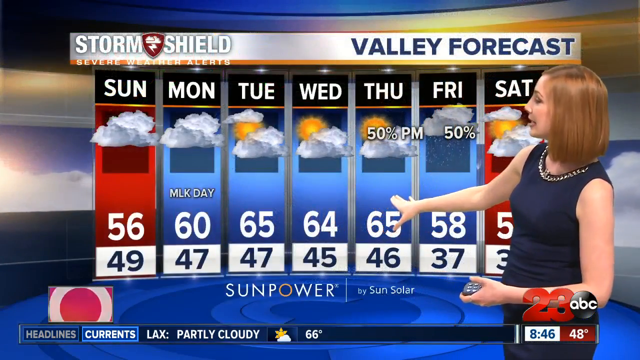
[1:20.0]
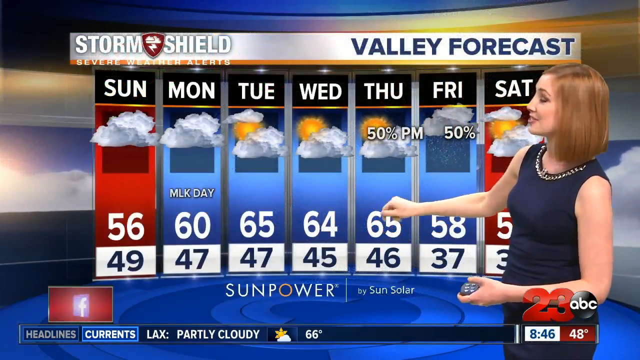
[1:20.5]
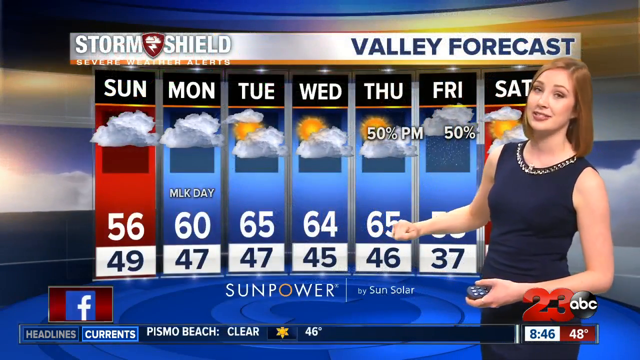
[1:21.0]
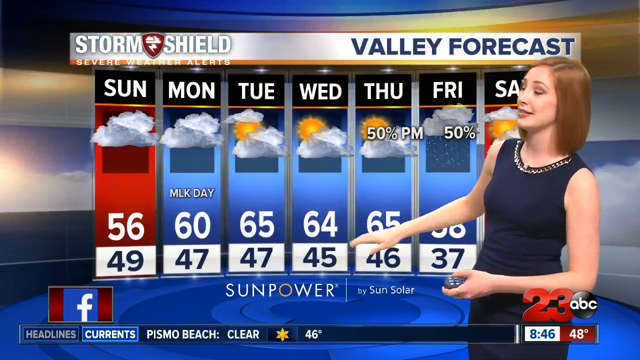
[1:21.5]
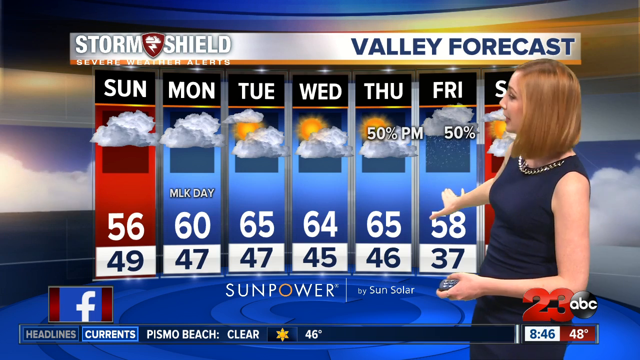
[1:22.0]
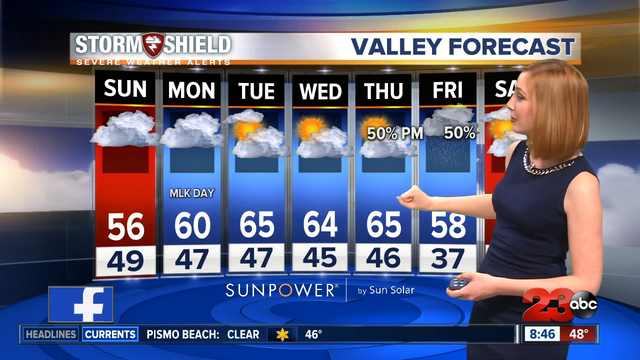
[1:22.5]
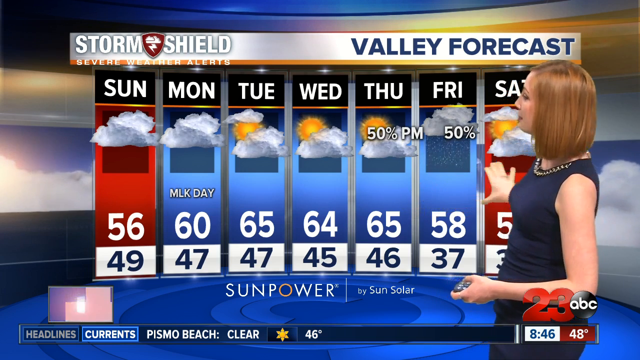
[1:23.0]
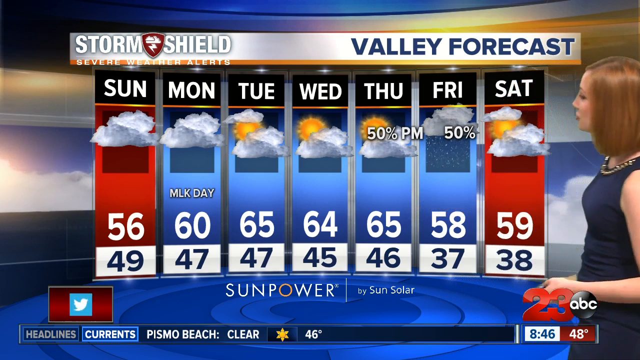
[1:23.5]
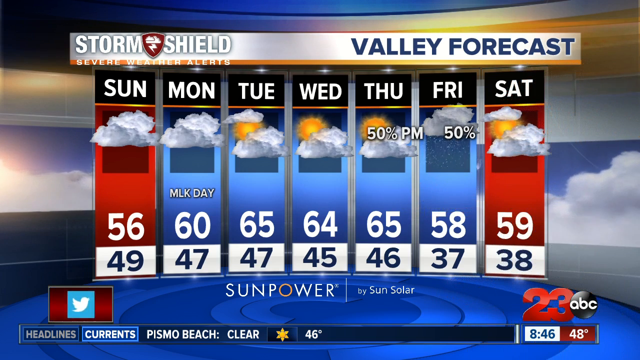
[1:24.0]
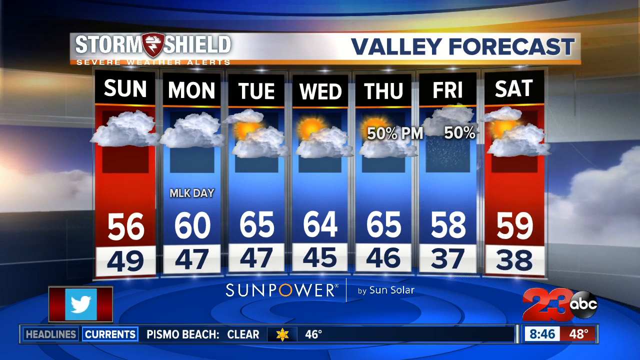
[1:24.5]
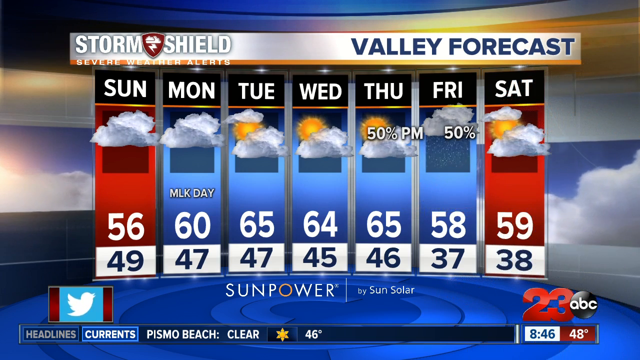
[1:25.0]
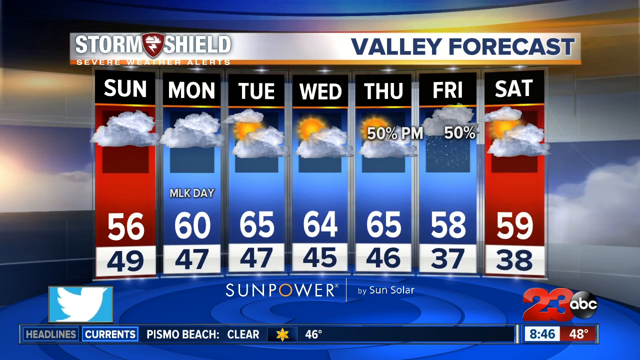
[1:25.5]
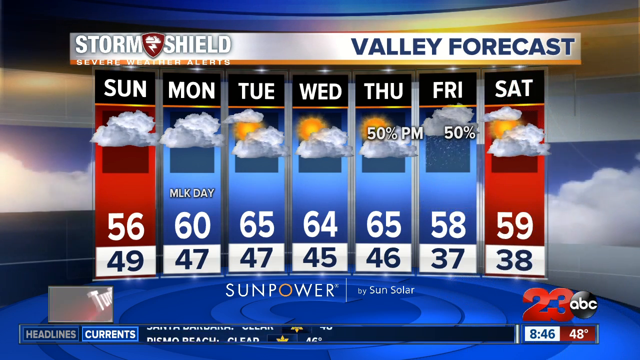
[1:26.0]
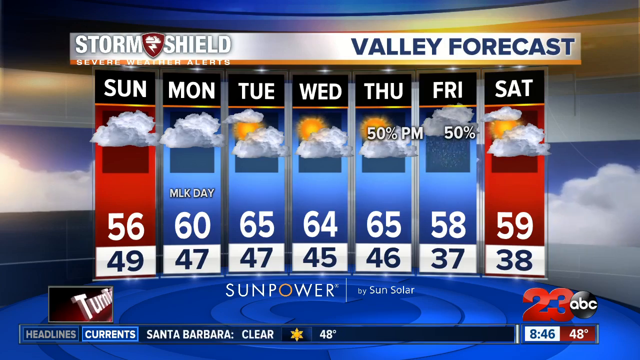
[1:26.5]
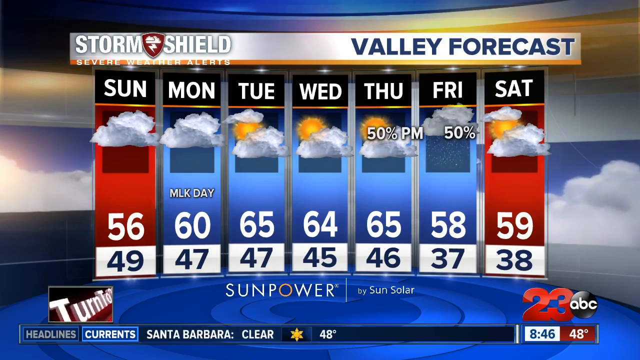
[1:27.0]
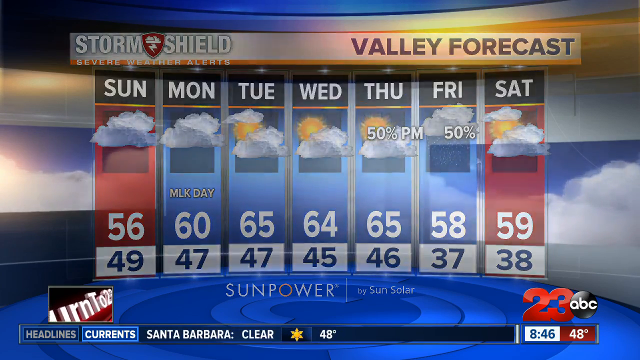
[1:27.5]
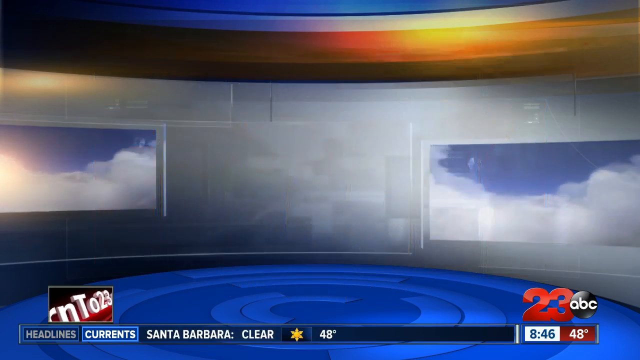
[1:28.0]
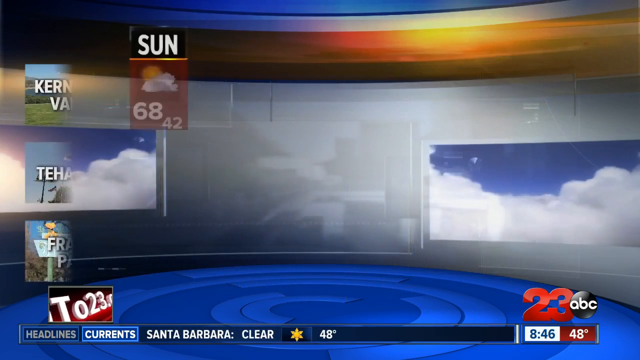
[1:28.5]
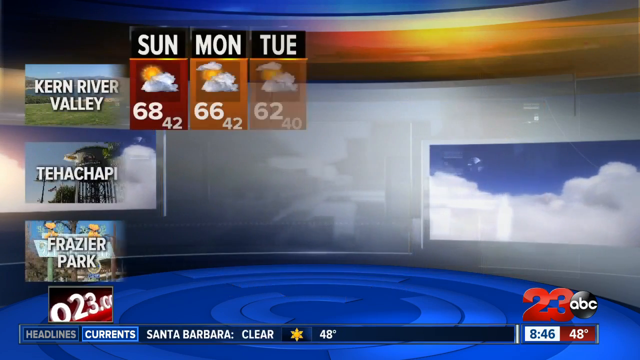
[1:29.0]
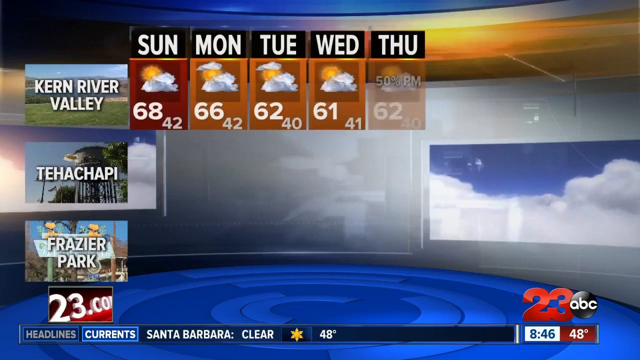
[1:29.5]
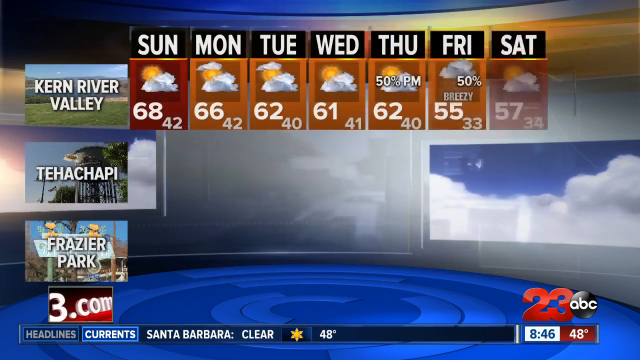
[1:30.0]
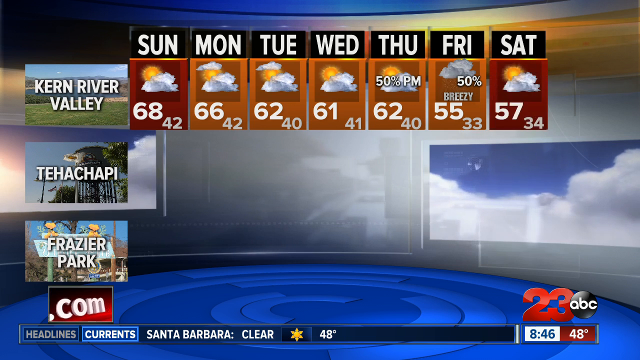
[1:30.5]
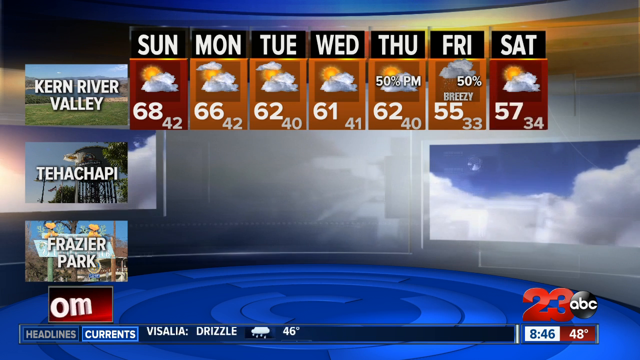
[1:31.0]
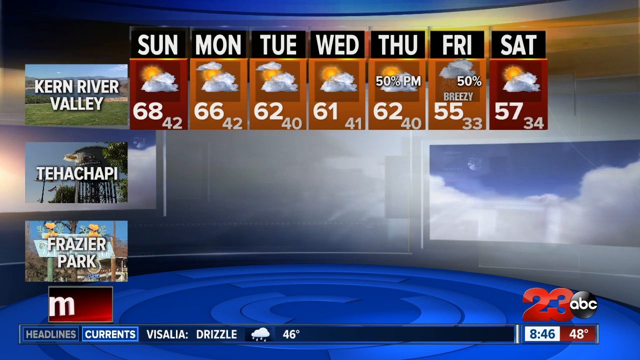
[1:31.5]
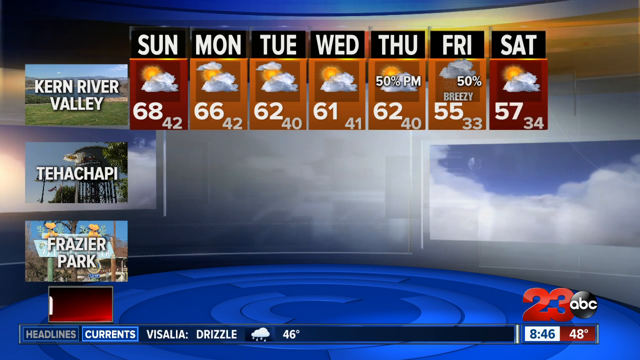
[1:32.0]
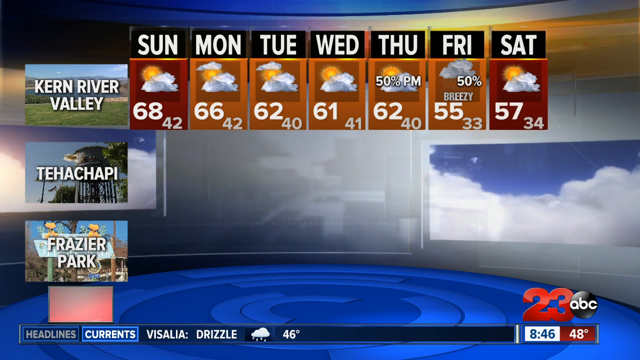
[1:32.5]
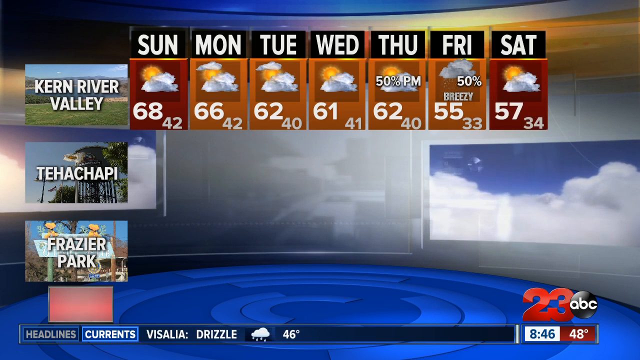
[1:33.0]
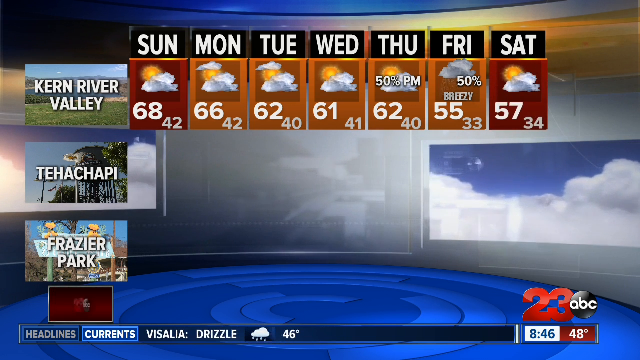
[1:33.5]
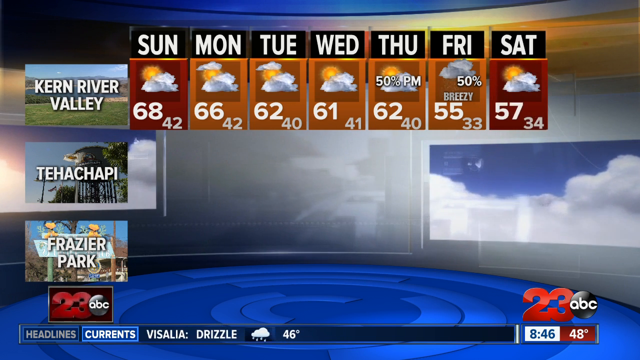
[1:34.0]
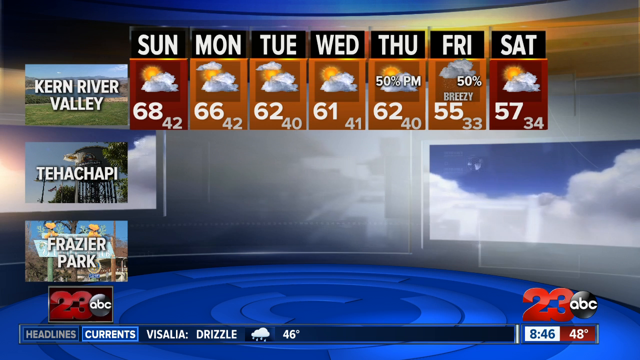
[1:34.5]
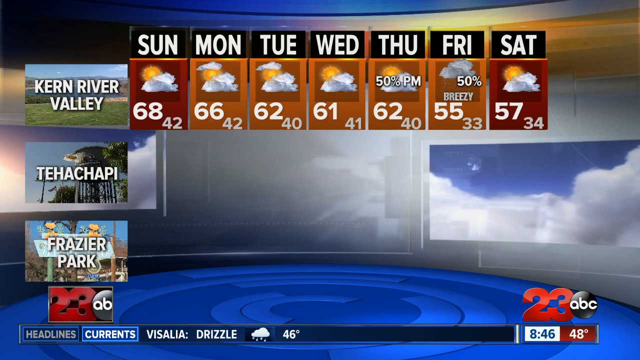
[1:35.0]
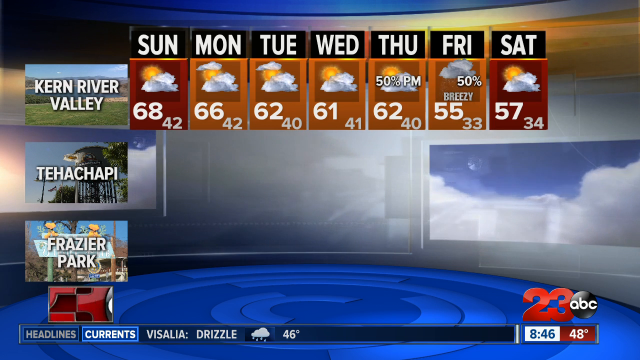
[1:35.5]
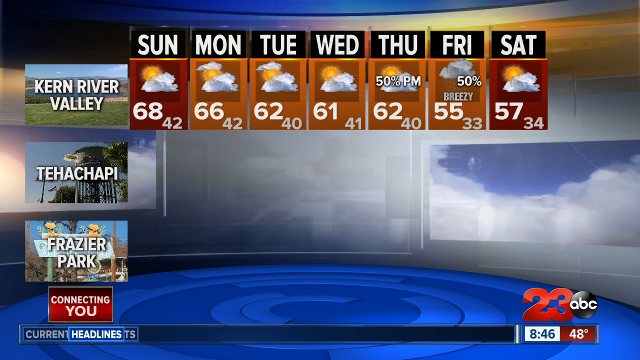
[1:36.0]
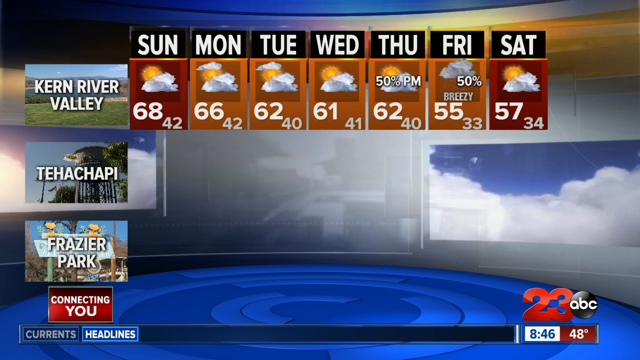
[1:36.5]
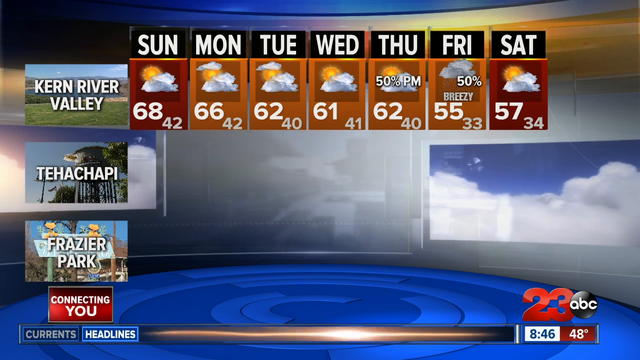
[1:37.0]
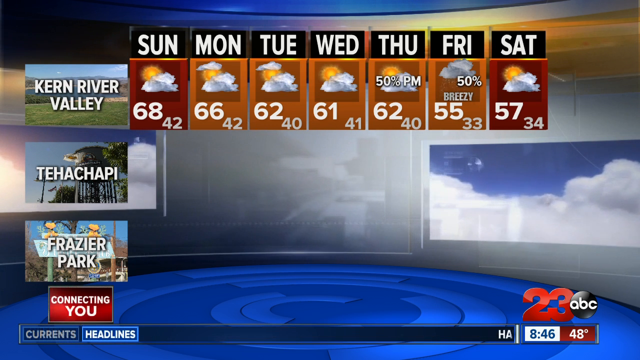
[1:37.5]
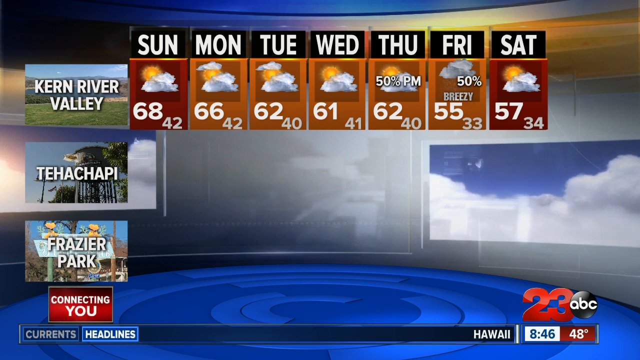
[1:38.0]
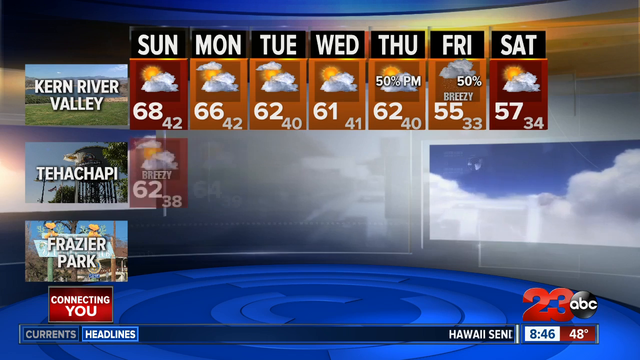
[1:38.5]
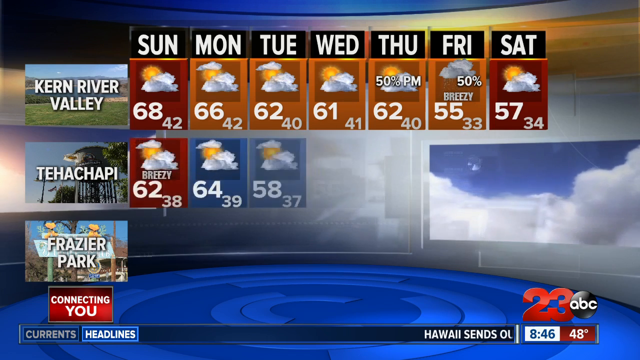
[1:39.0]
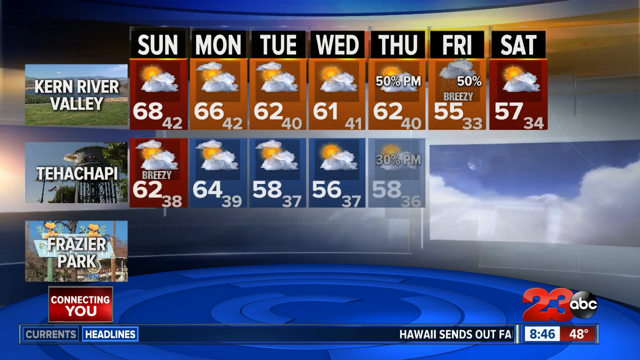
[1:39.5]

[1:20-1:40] The woman moves away from the screen, leaving only the Valley forecast shown: Sunday 56 to 49 degrees, Monday 60 to 47, Tuesday 65 to 74, Wednesday 64 to 45, Thursday 65 to 46, Friday 56 to 37, and Saturday 59 to 38. Next, Cairn River Ferry is shown from Sunday to Saturday: Sunday 68 to 42, Monday 66 to 42, Tuesday 52 to 40, Wednesday 61 to 41, Thursday 62 to 40, Friday breezy at 50% with 53 to 33, and Saturday 57 to 34. Forecasts of other sites are shown alongside.